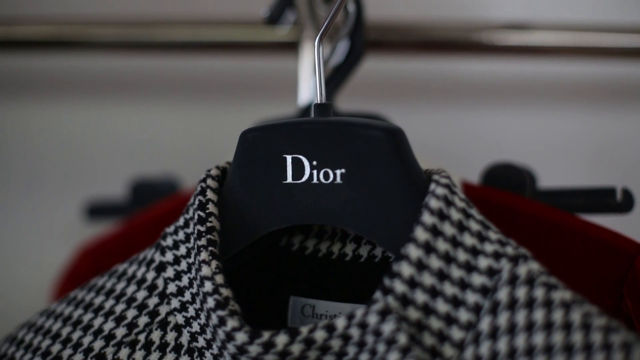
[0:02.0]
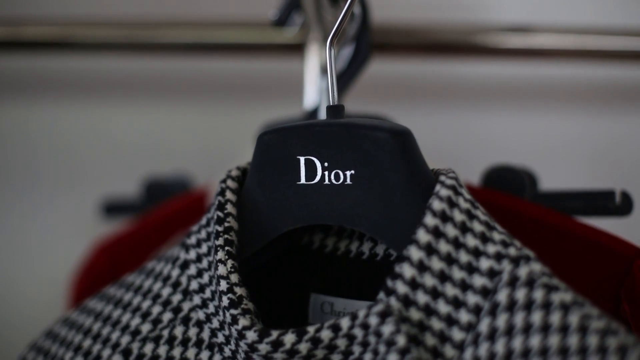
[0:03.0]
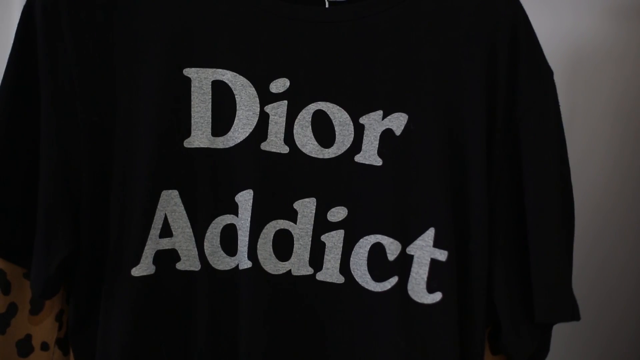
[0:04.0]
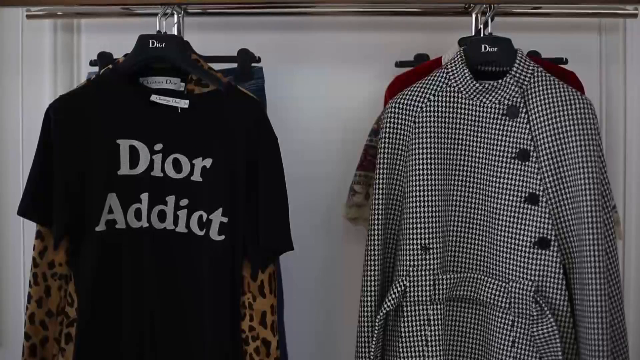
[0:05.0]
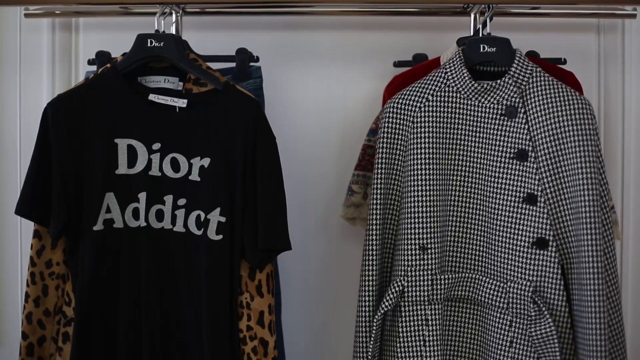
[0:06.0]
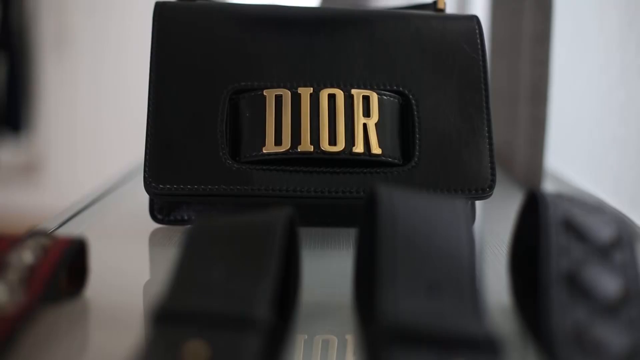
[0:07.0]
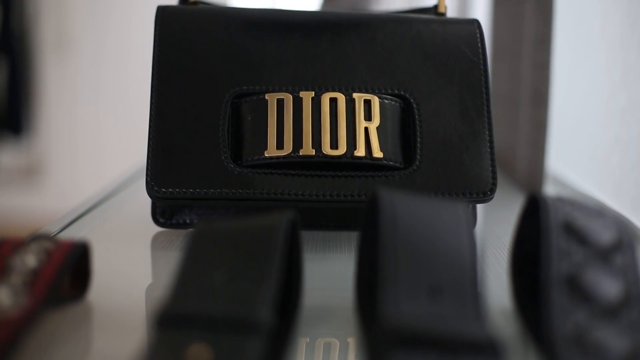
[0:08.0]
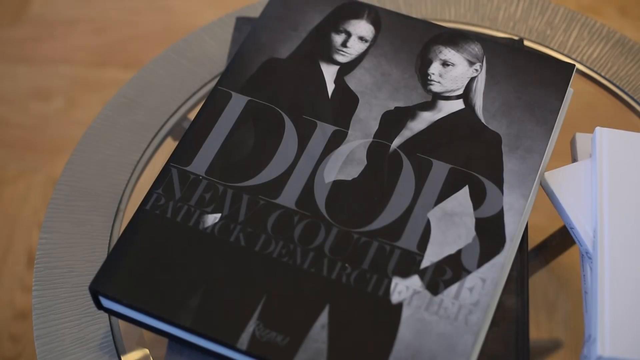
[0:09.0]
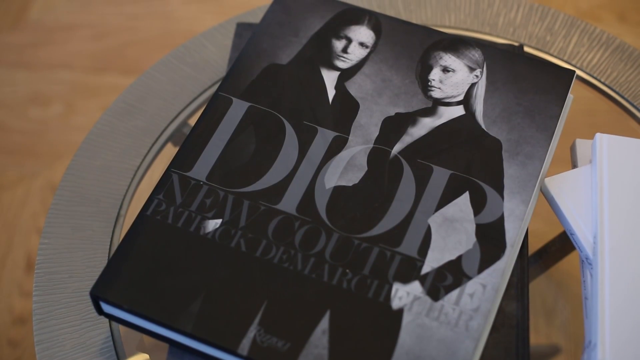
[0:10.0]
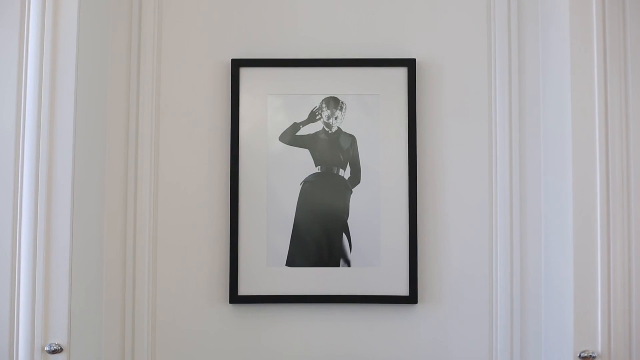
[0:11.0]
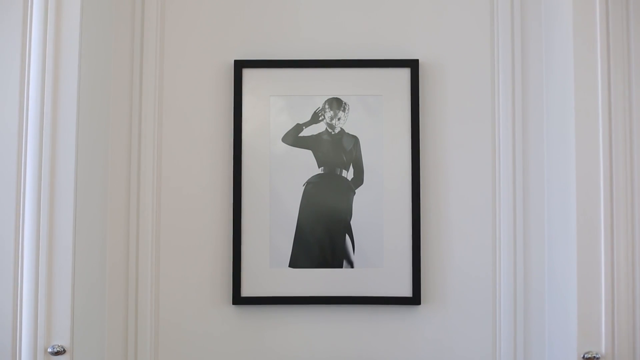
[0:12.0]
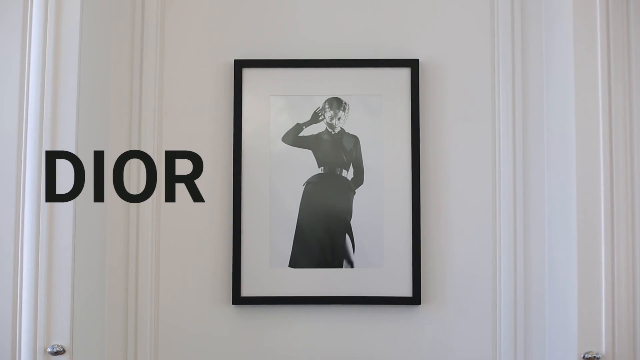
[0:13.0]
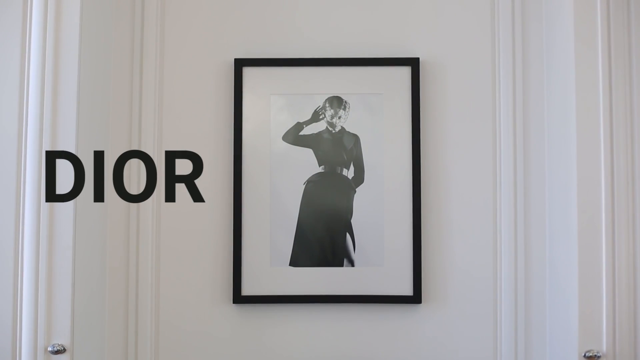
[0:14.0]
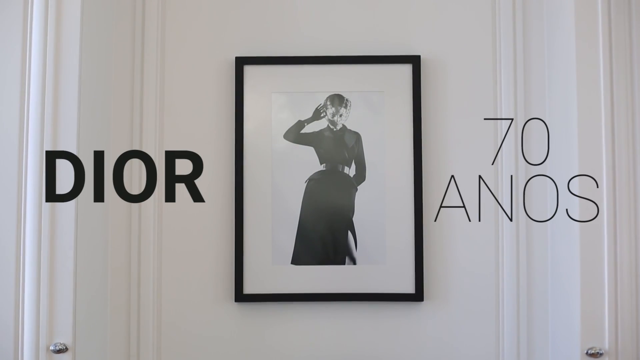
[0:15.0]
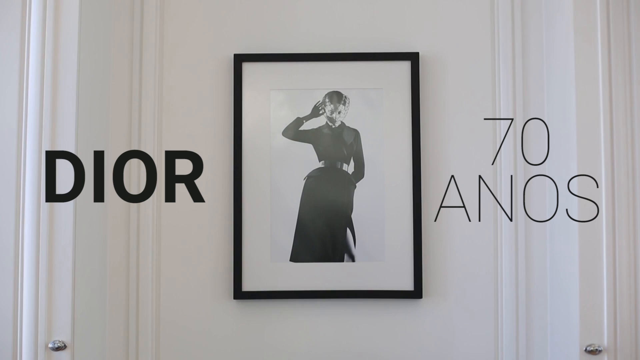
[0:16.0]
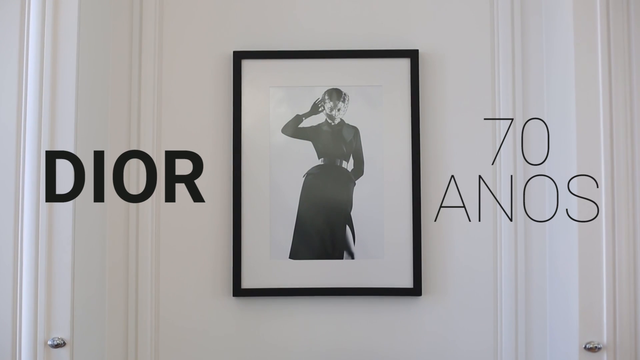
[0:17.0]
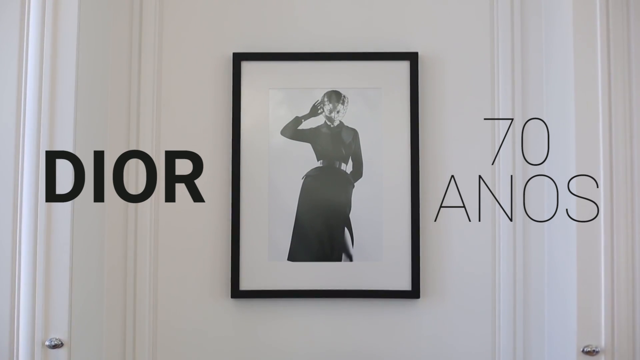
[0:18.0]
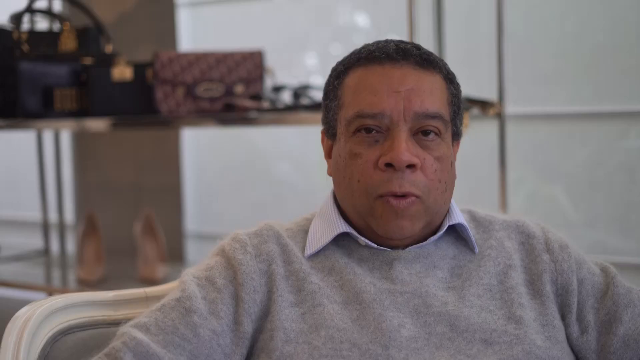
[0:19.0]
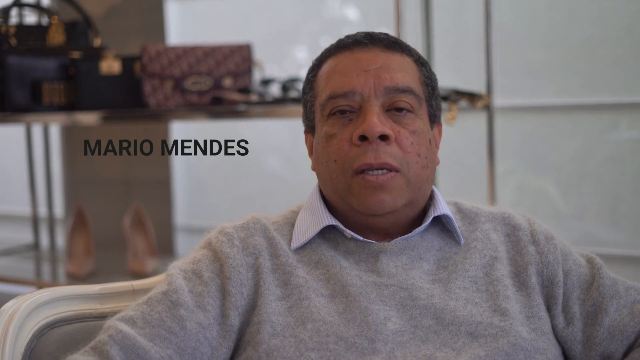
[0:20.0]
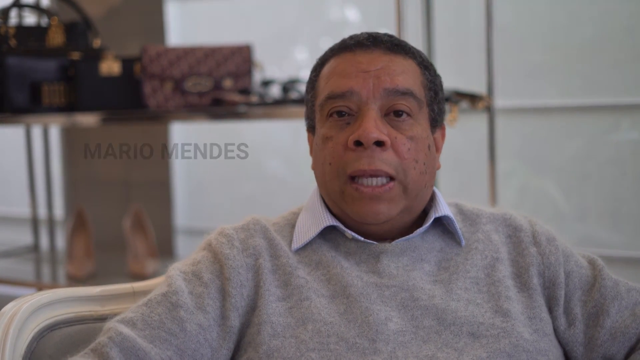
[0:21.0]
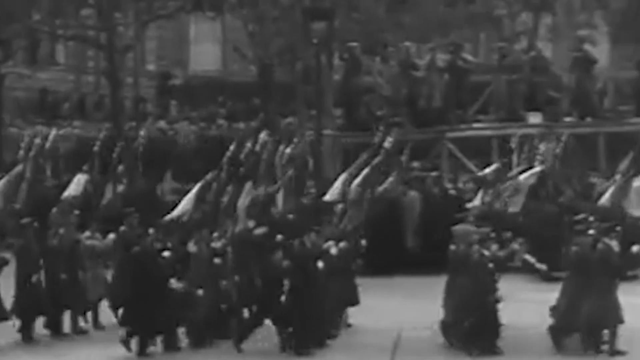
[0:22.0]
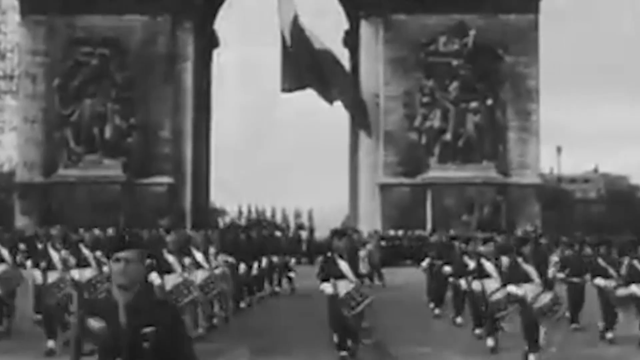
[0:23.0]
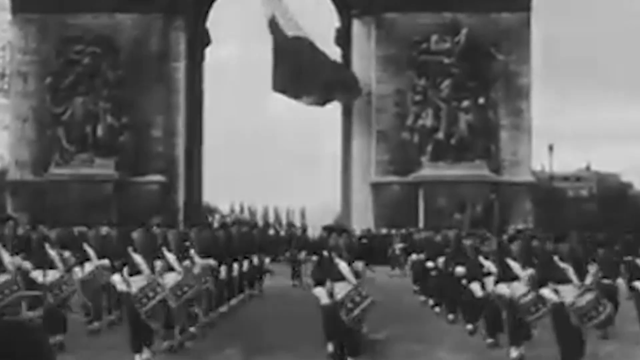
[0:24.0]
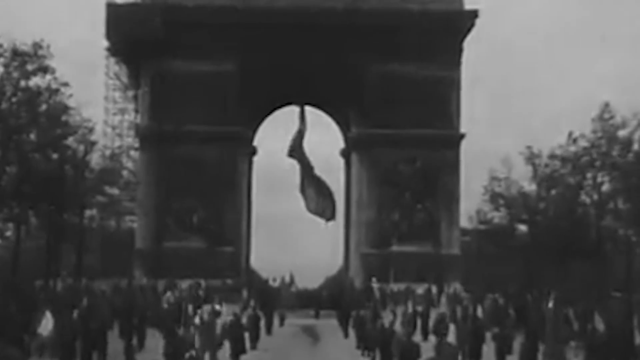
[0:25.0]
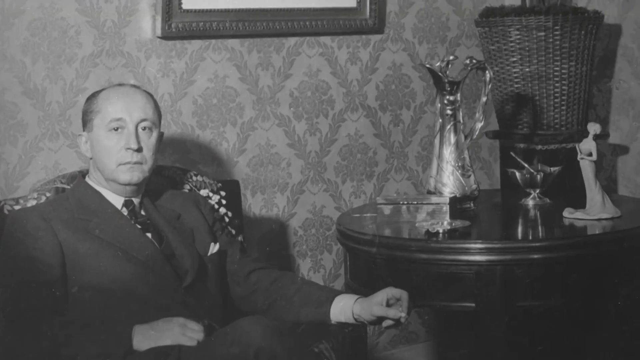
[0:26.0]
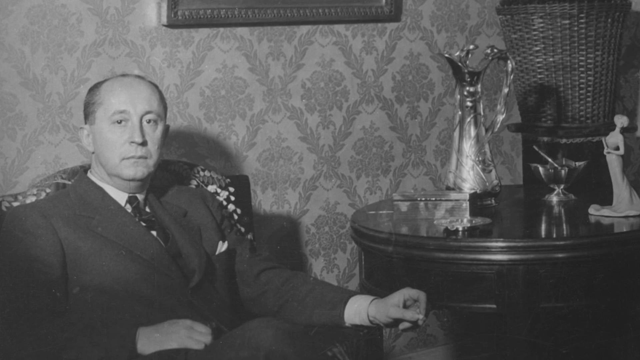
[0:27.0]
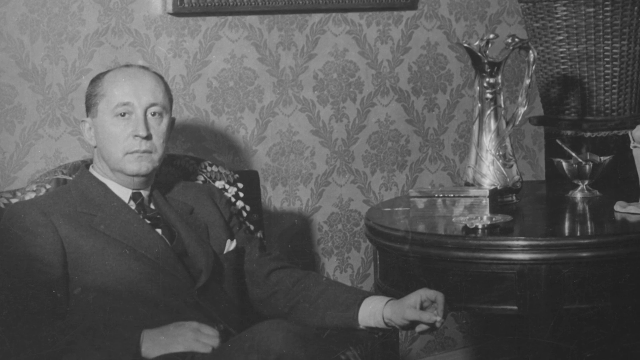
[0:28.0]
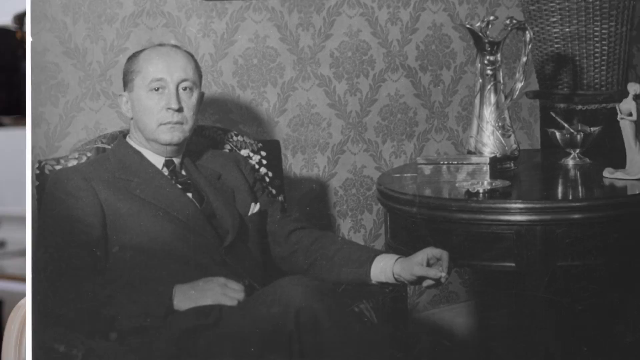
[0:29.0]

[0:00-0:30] The video is about the company Dior. A black-and-white t-shirt hangs on a clothes holder on the curtain. Then the words "Dior Addict" appear, with a black shirt next to the black-and-white shirt, as several Dior advertisements are shown. A magazine with a black-and-white cover appears: on it, a woman dressed in black with straight black hair is next to a blonde woman also wearing black clothes, and the cover reads "Dior New Culture". On an all-white wall there is a white picture with black wooden edges, showing a woman in all-black clothes with her hand on her ear; the wall around the picture is also all white. "Dior" is written on the left of the screen and "70 years" on the right, apparently marking 70 years of the Dior magazine.